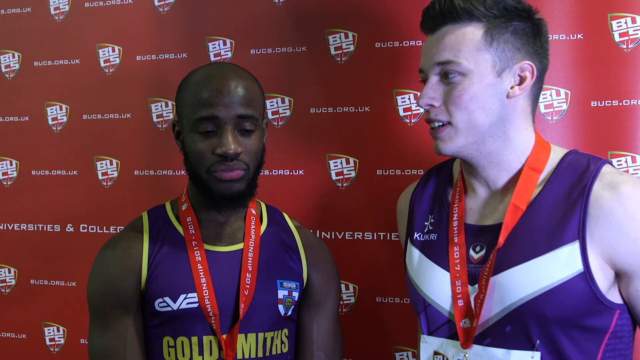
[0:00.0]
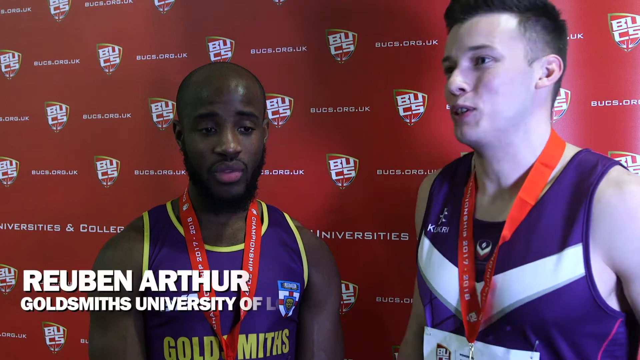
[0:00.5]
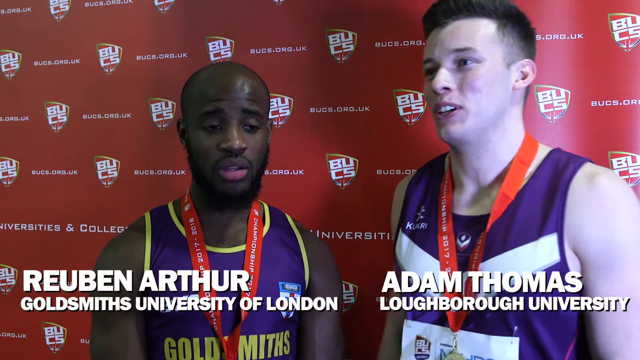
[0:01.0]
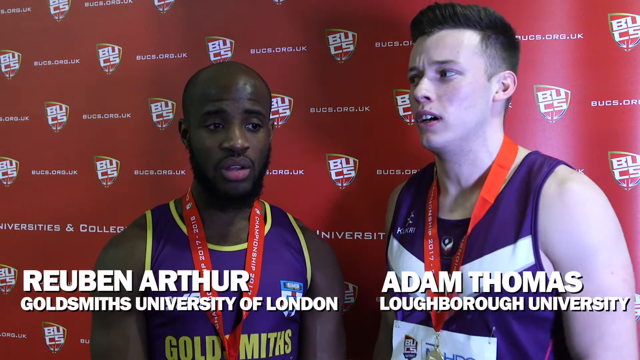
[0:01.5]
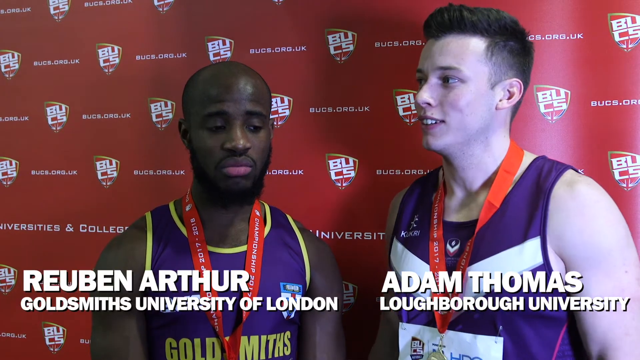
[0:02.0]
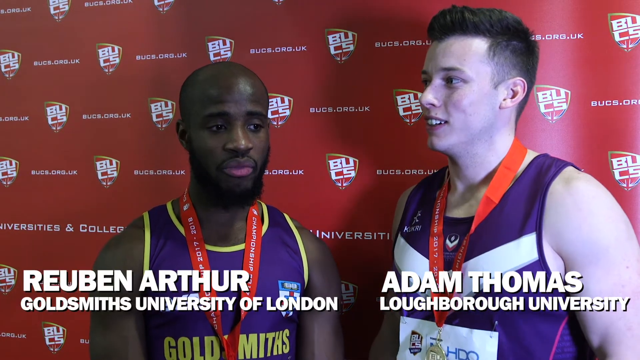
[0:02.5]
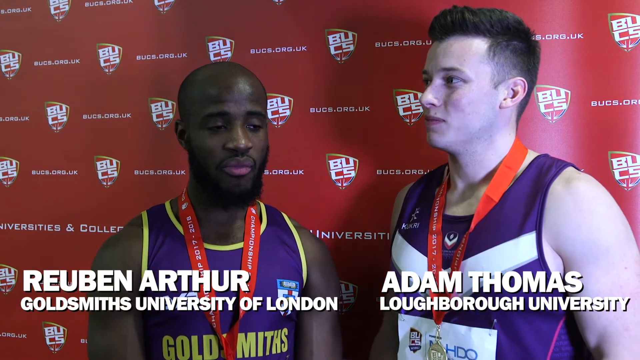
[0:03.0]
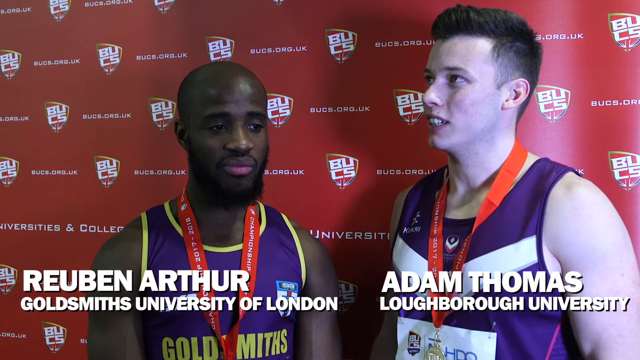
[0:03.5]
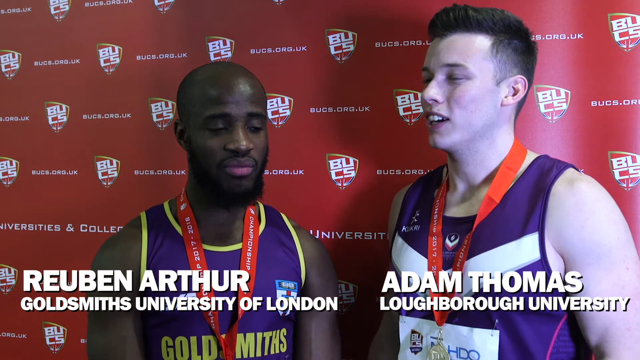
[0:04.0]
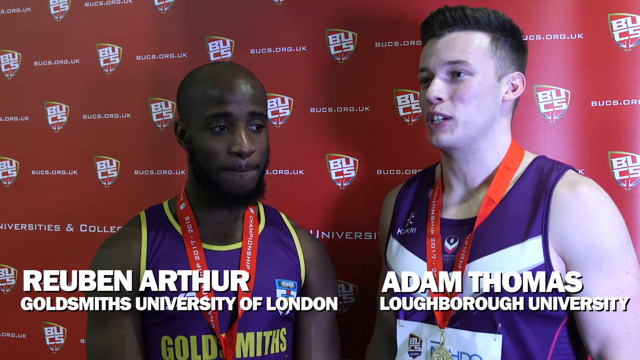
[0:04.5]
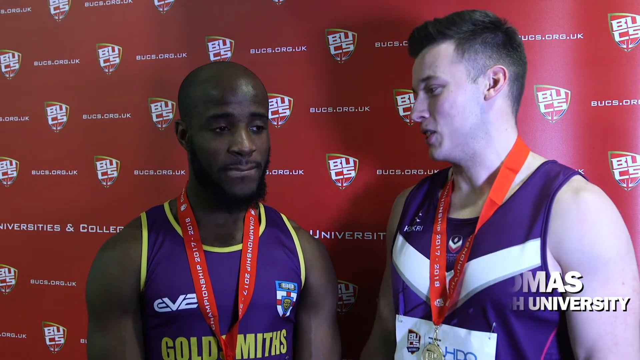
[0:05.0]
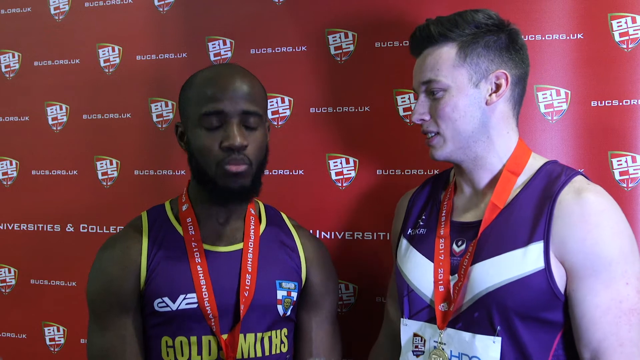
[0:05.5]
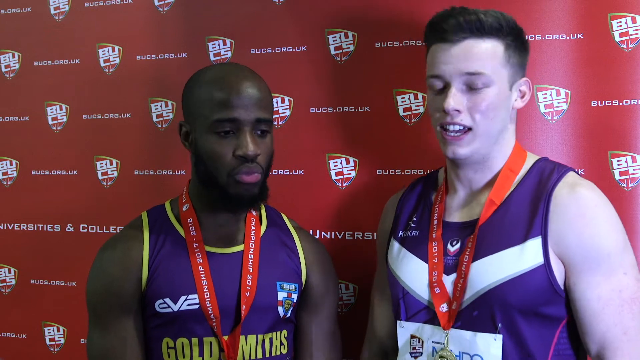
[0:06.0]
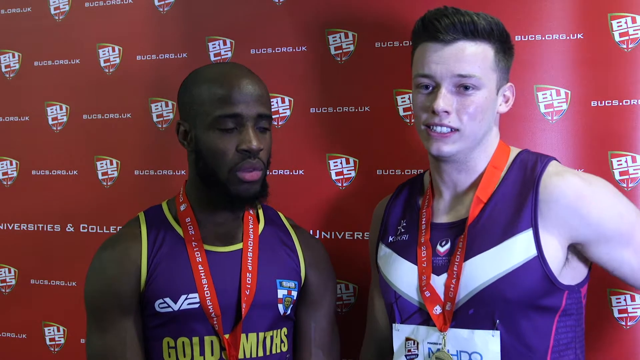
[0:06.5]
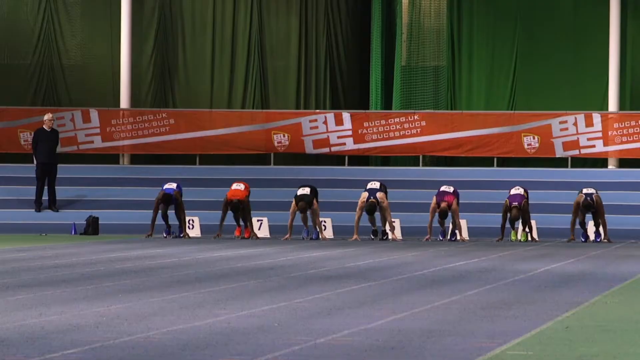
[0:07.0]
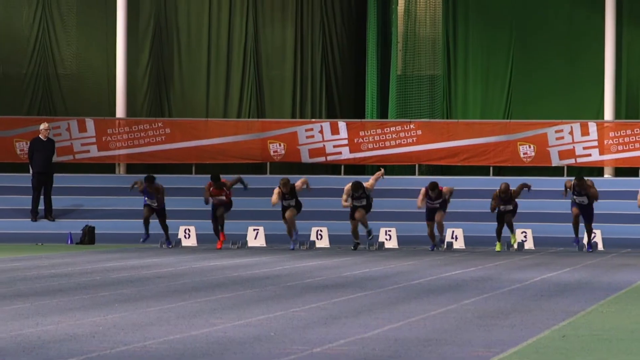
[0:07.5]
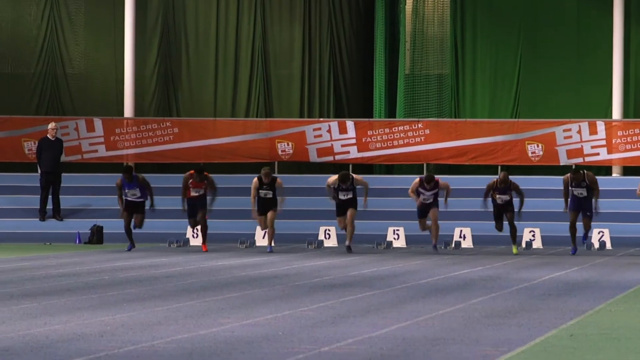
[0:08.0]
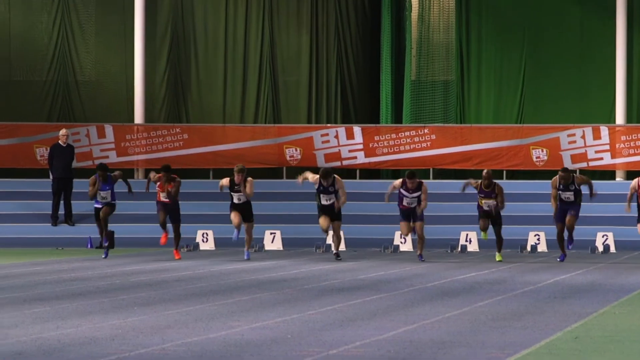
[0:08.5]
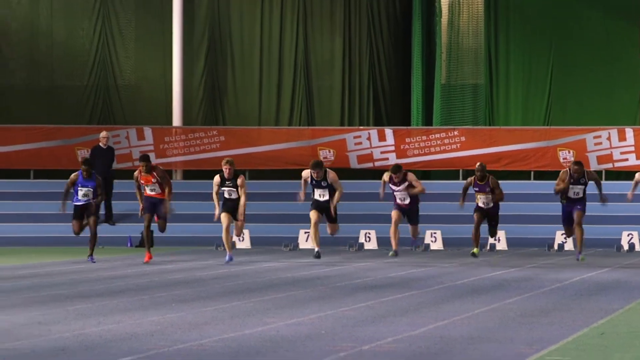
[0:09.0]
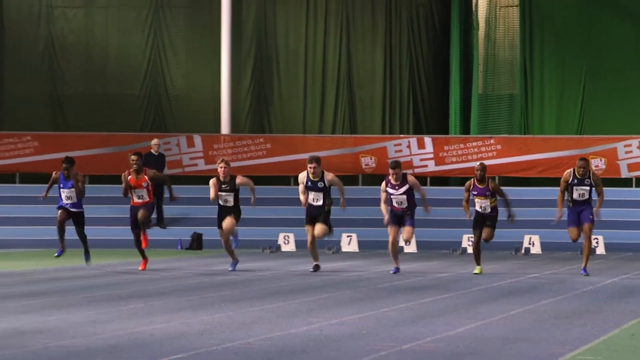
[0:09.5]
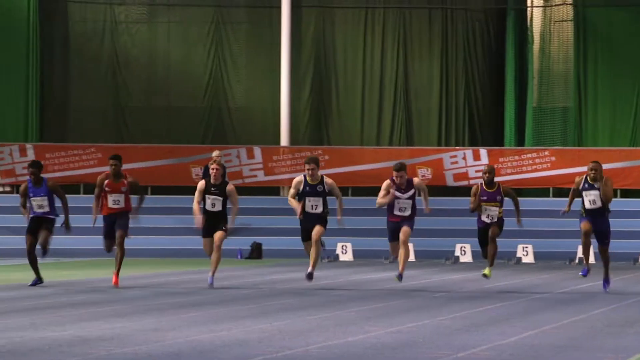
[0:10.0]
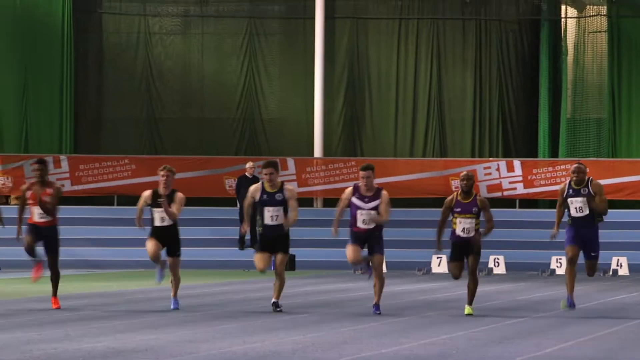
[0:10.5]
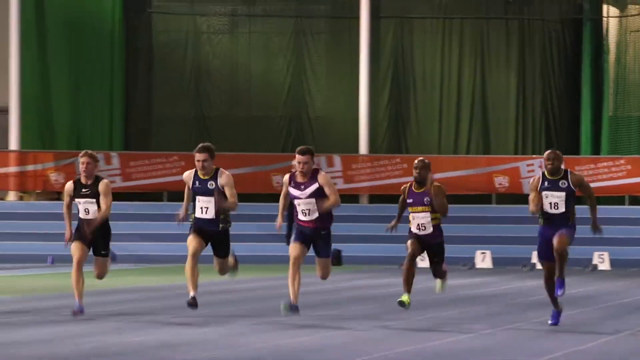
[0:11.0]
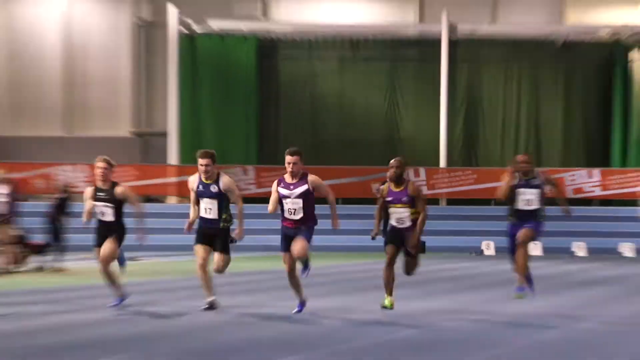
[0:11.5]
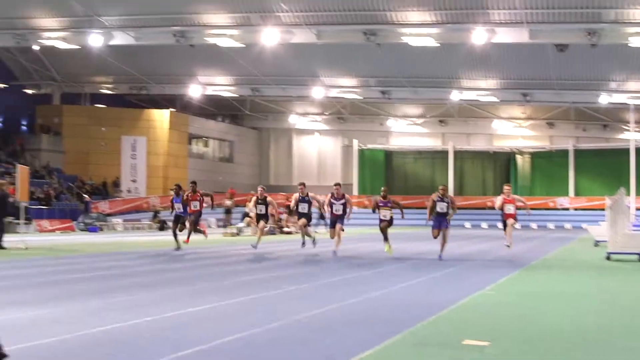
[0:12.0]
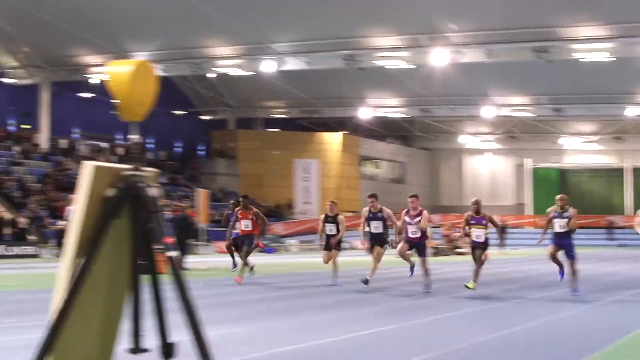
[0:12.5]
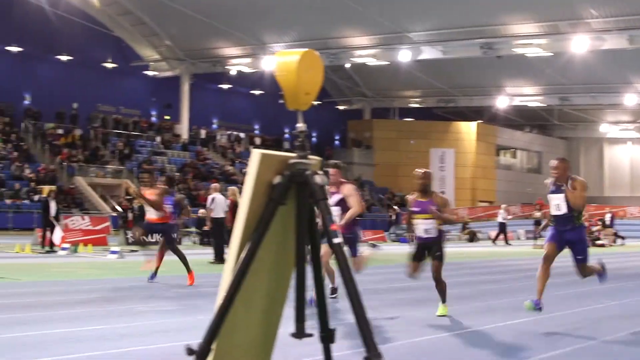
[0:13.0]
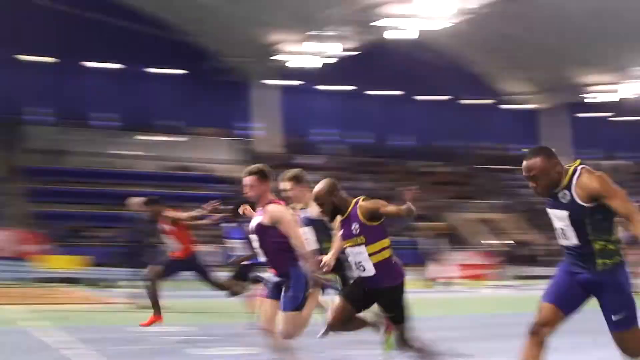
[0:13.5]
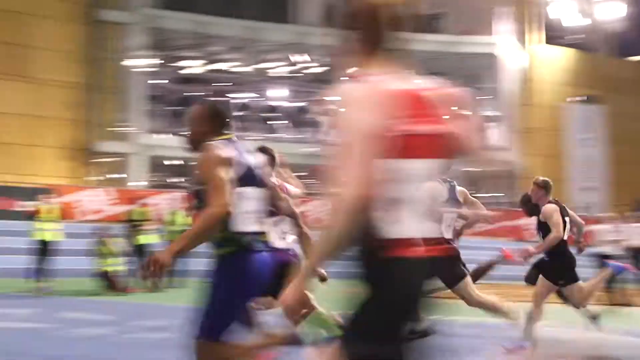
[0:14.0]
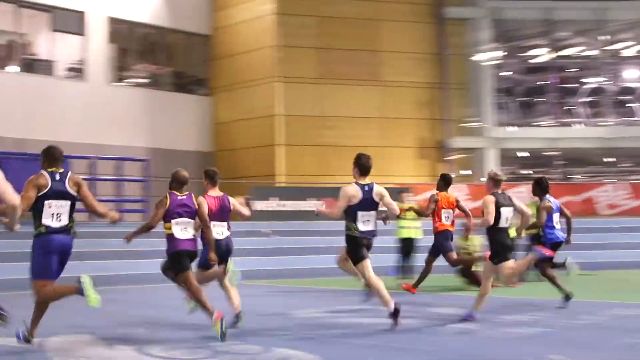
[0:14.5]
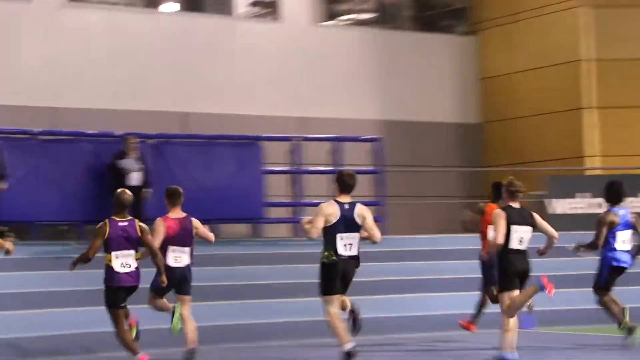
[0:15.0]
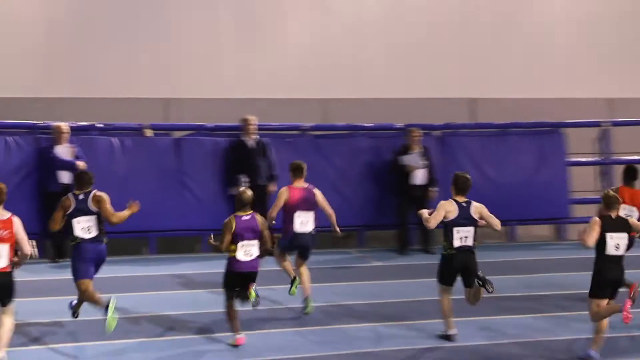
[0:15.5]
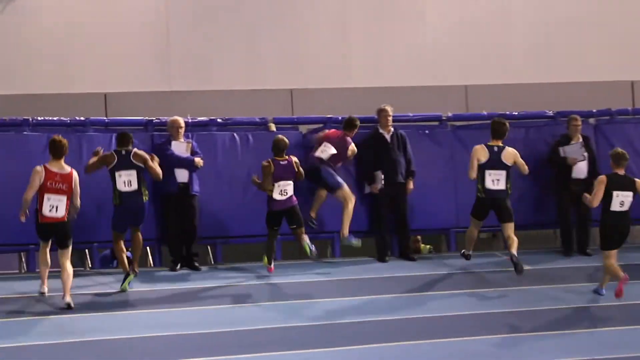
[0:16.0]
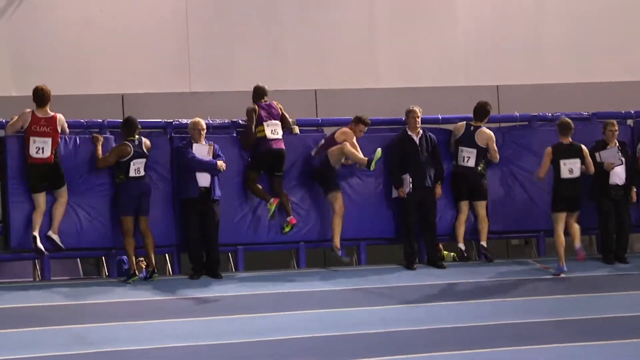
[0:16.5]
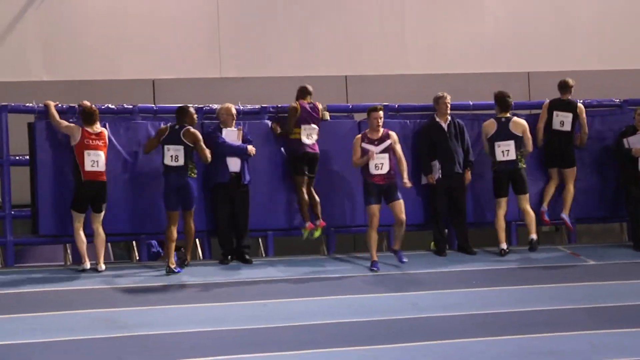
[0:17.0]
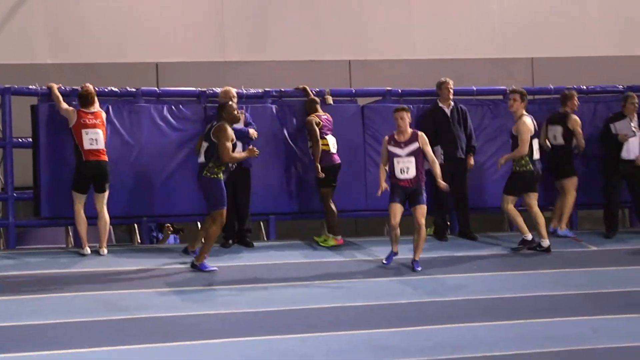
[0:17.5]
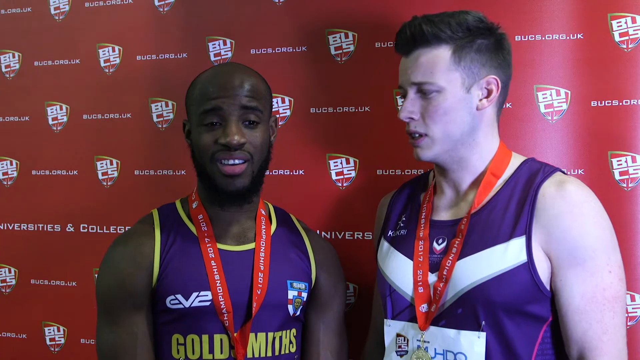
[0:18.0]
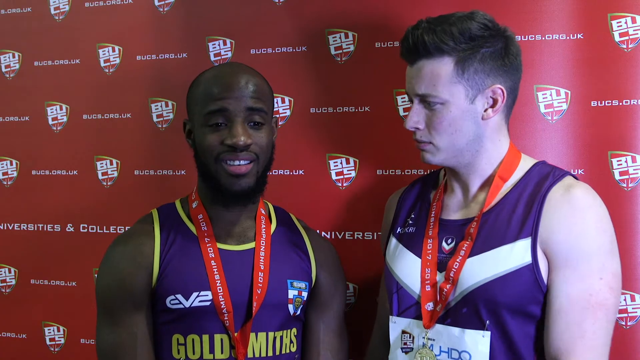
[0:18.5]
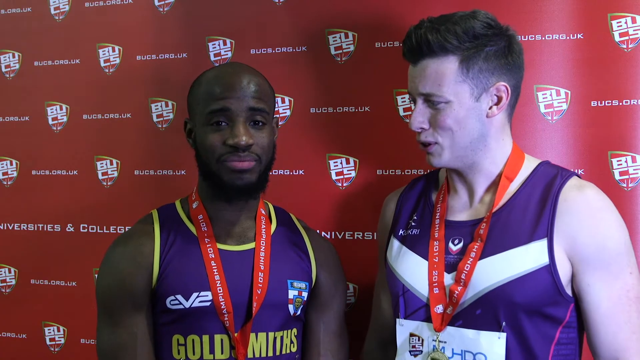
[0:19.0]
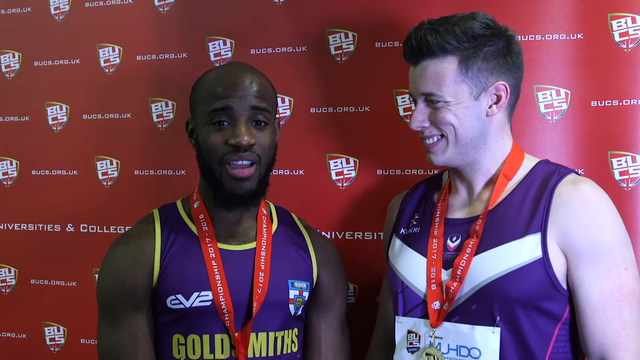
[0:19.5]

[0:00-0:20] Two men stand side by side; they look like athletes. Both wear sleeveless tank tops and have medals with red ribbons around their necks, and they stand against a red backdrop with a team logo that says "BUCS". Their names are labeled: the black man on the left is "Reuben Arthur, GoldSmiths, University of London", and the white man on the right is "Adam Thomas, Loughborough University". The man on the right talks with excitement while the man on the left nods in agreement. The scene then changes to athletes sprinting on a track, approaching the camera. Eight of them run very fast in their lanes in an indoor arena, with spectators on the sidelines. At the far end the athletes run into a padded purple foam stopper that stops them and protects them from hitting the wall.